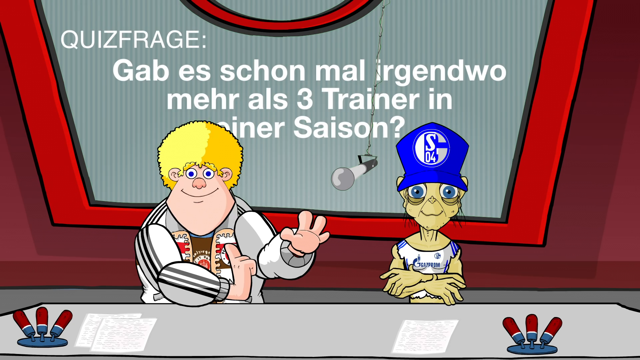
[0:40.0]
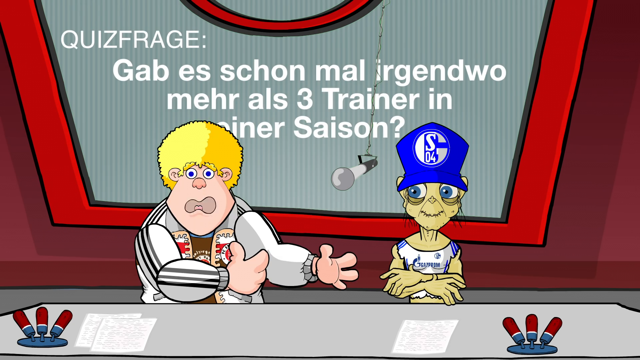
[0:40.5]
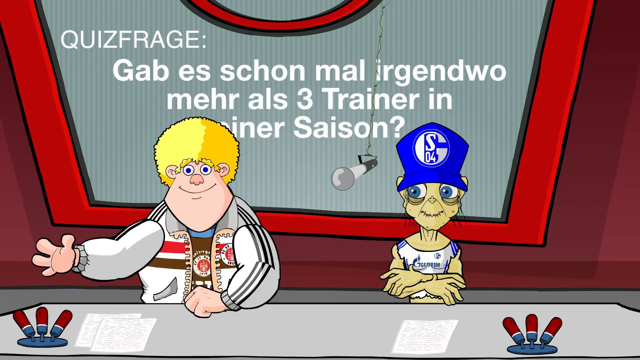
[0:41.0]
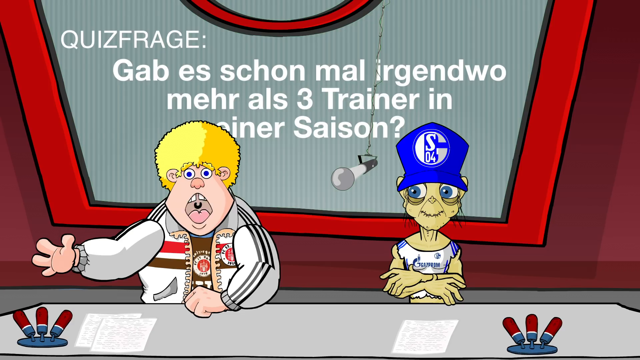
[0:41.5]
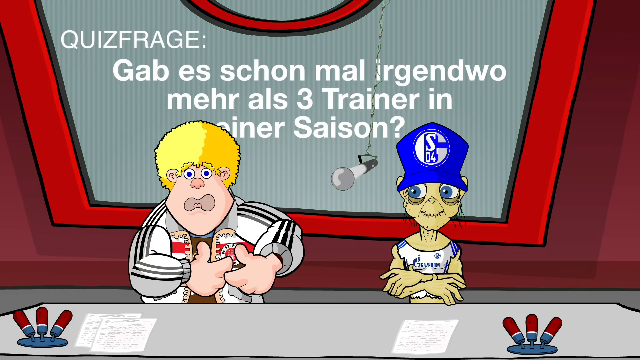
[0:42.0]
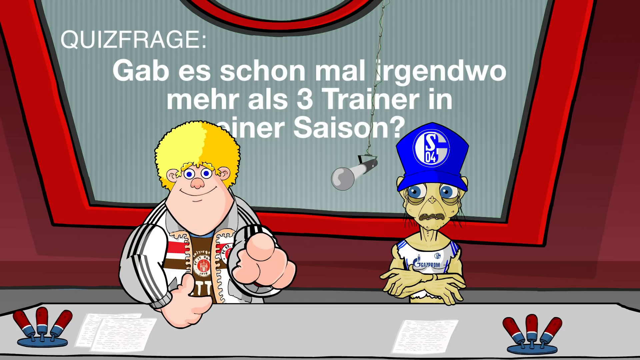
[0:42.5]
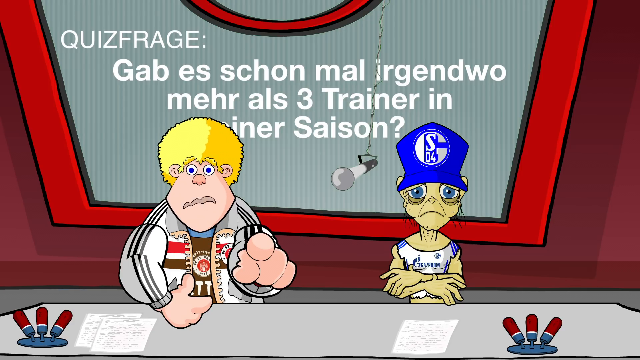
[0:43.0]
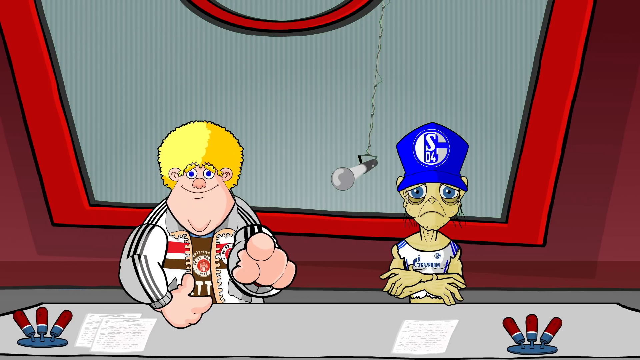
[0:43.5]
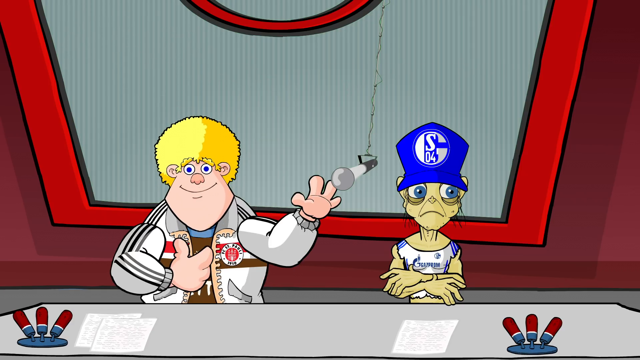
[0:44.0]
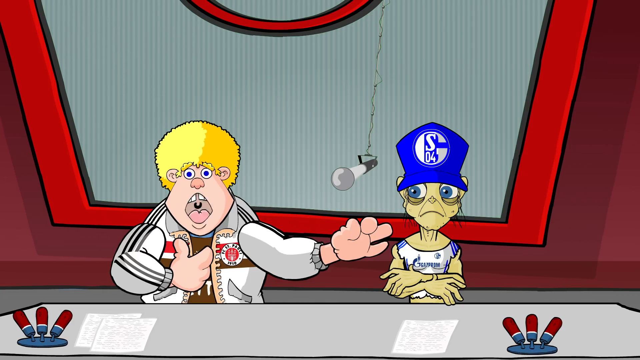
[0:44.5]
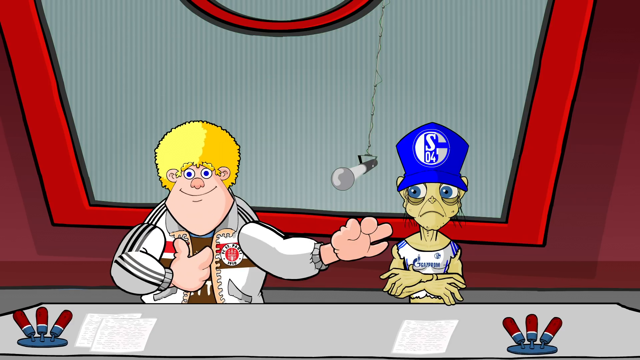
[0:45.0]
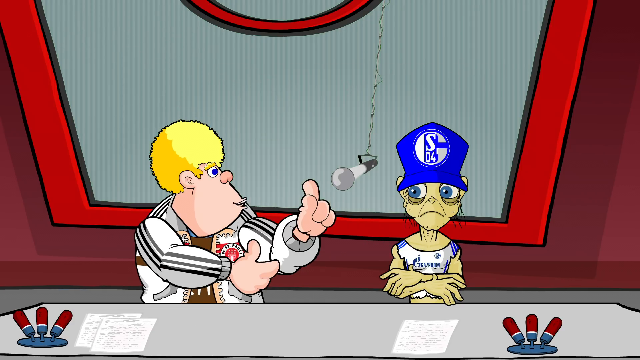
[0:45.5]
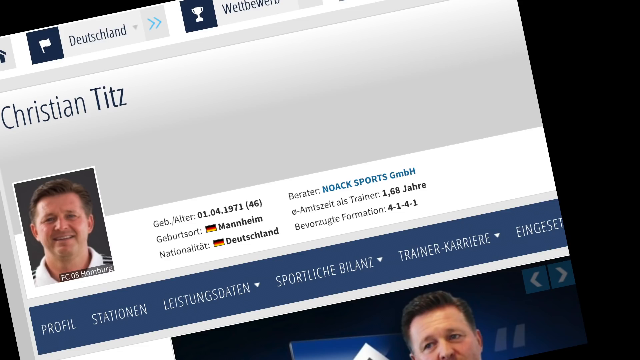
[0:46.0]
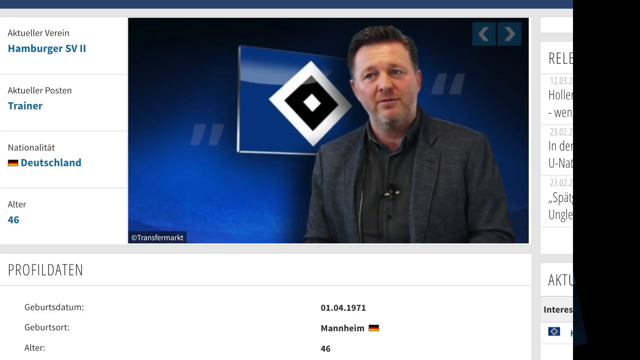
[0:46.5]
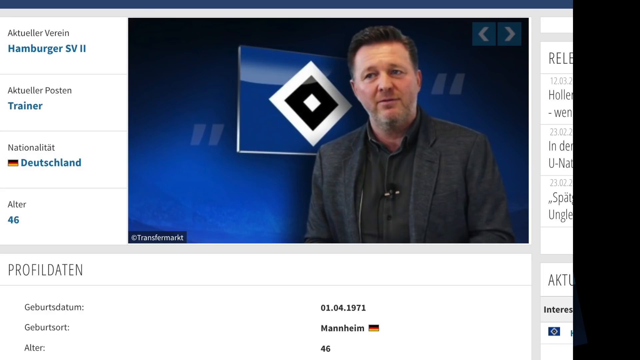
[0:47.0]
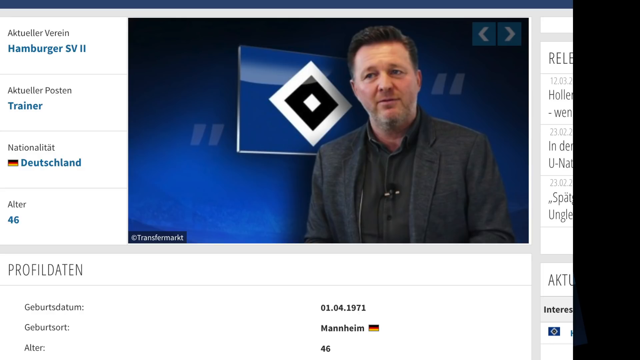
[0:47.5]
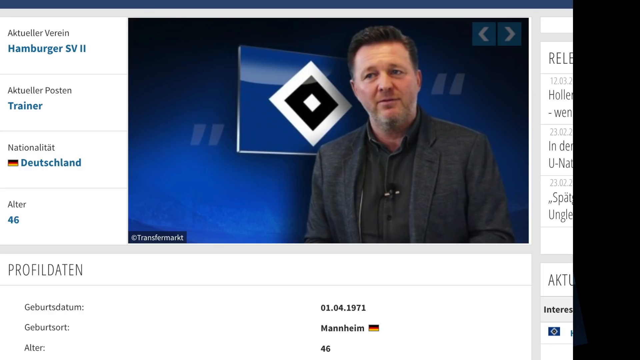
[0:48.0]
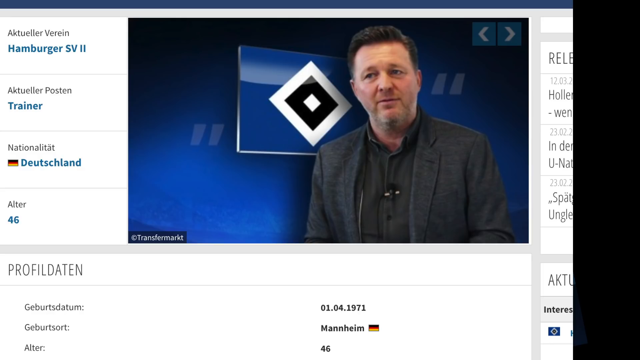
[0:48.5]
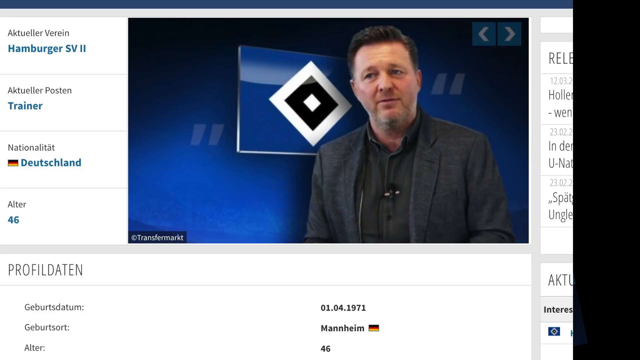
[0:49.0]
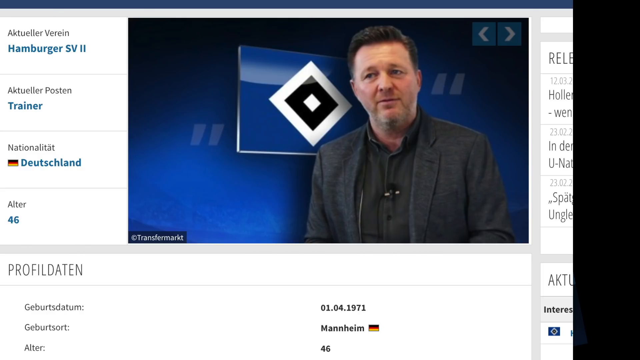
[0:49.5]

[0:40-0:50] The two subjects remain in view: the alien subject, not really smiling, with a kind of brown-looking depiction, and the other character chatting. The view then transitions to a screen that looks like a webpage or application screen with someone's face on it, and then to another screen with a person on it and a sort of blue and blackish background. No other subjects appear besides that face and the two main characters.